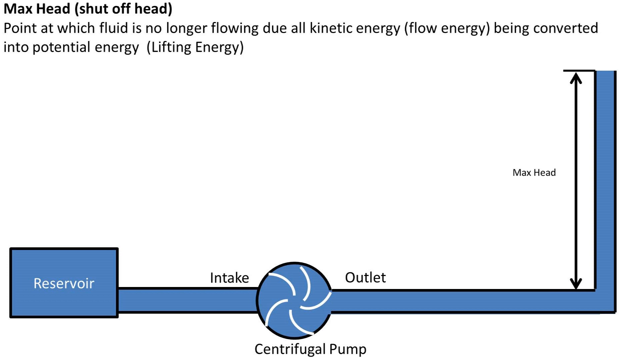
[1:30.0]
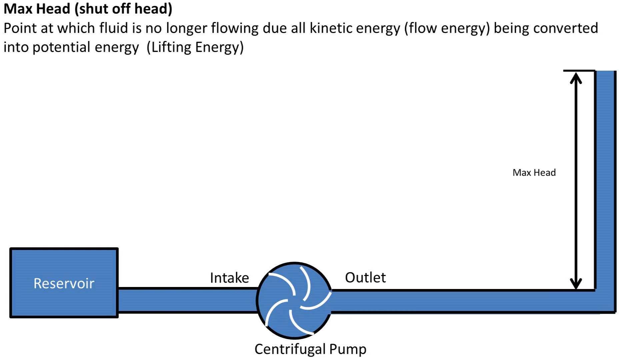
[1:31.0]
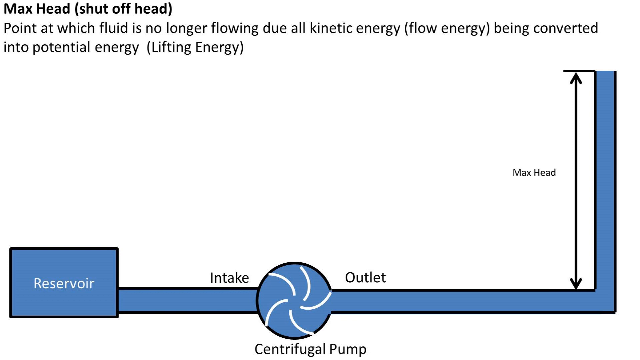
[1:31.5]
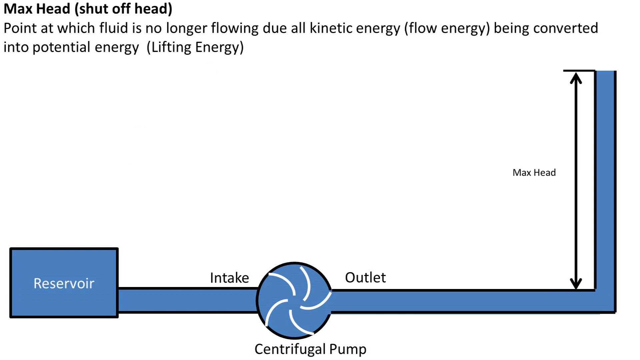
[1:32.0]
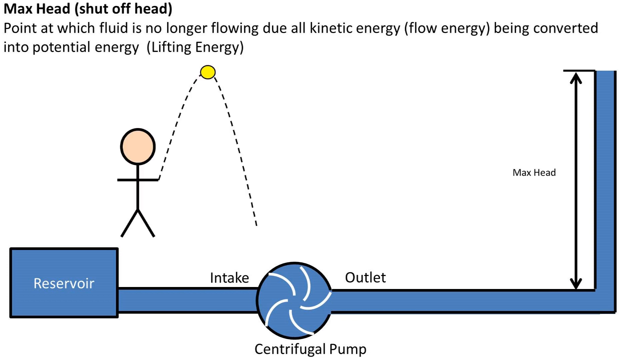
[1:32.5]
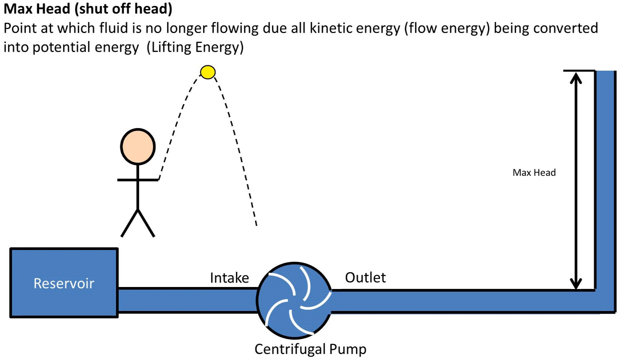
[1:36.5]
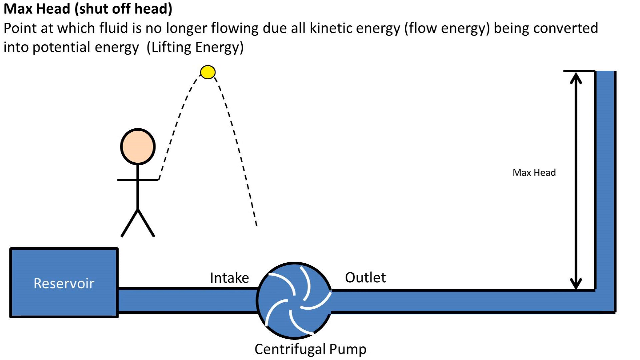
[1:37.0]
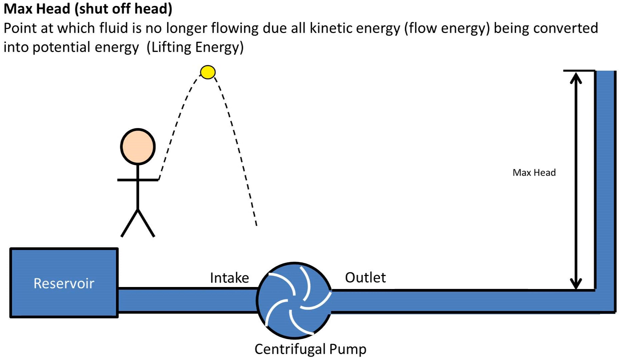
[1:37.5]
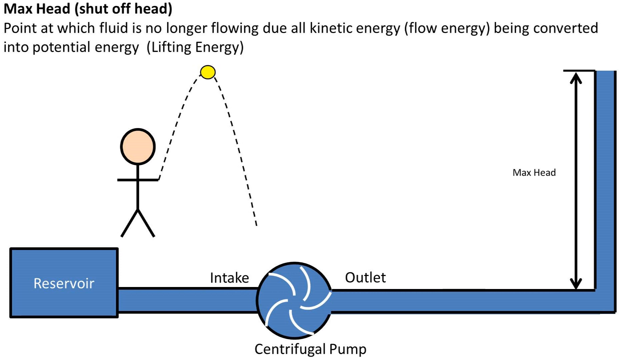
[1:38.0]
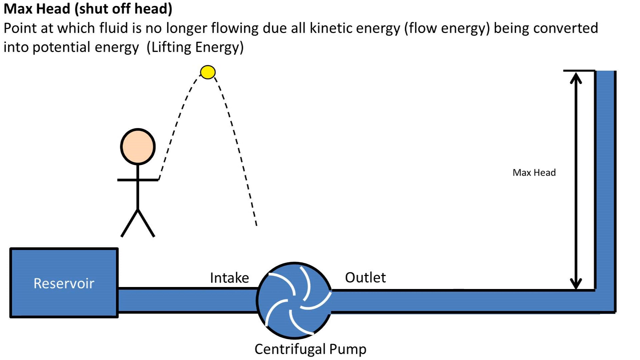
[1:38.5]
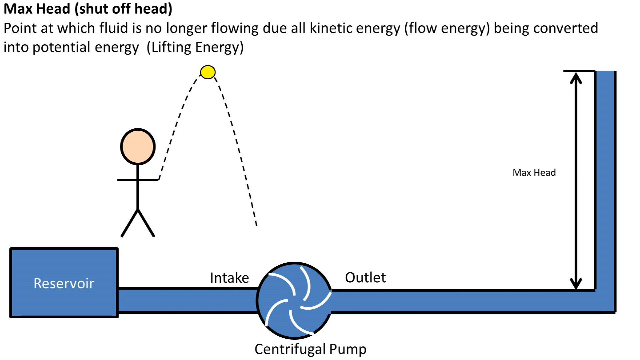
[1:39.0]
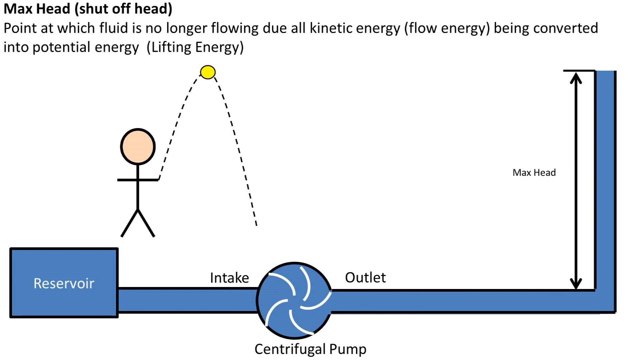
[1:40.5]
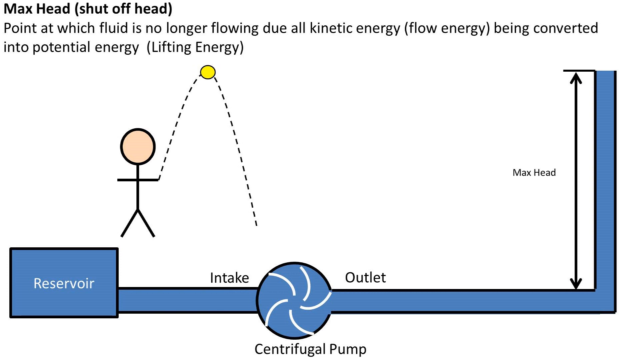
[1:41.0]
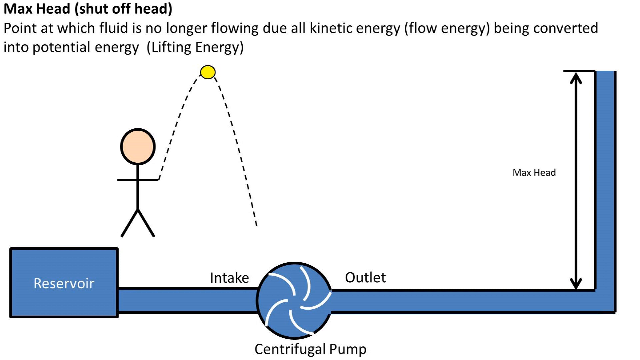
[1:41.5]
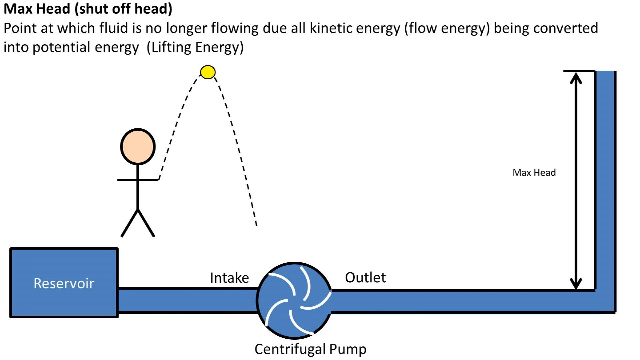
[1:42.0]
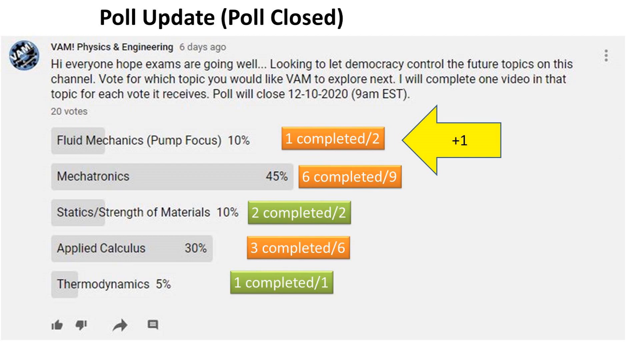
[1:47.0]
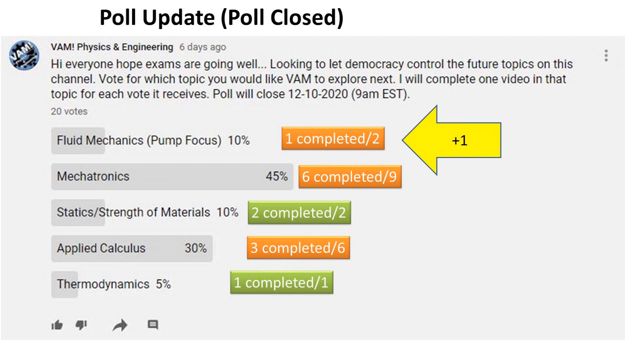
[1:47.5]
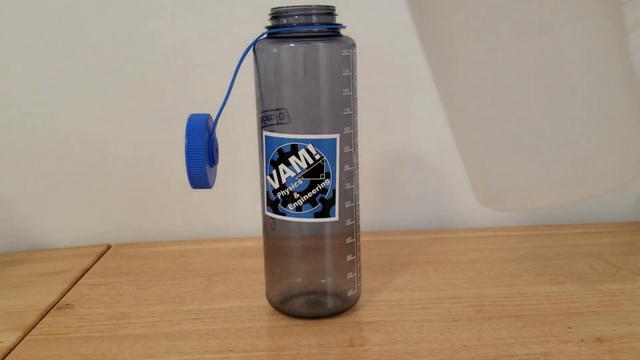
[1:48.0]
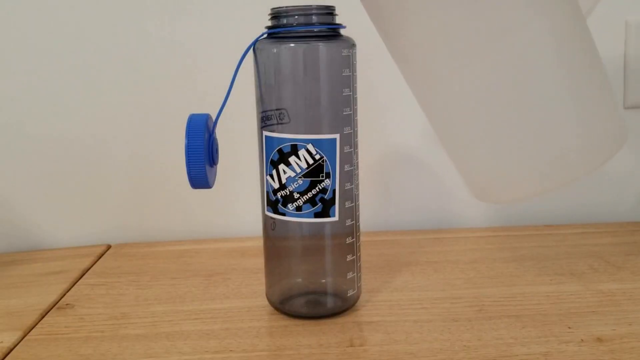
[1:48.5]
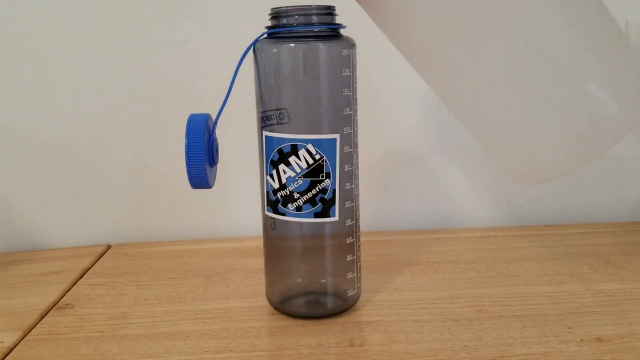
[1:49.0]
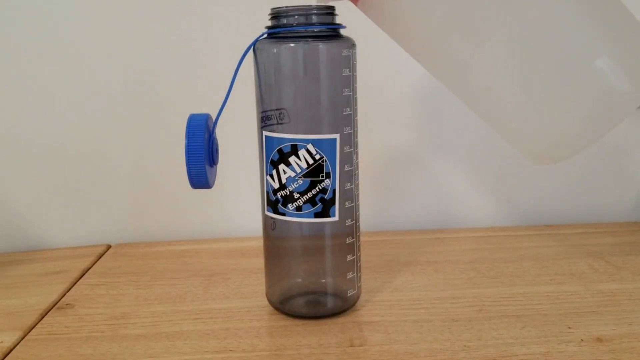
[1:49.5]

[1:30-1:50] The reservoir and the intake and outlet process are shown, along with a black arrow labeled max head indicating the maximum pressure. A stick figure is shown throwing a yellow ball, with the ball's energy shown while it is in the air. Black lines mark the ball's movement, each representing one frame of its position at that point in time. The scene then changes to a table with a gray water bottle with a blue lid. The background is white, with a white wall to the left of the desk.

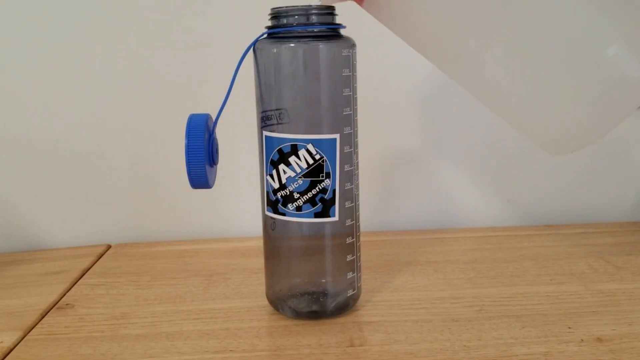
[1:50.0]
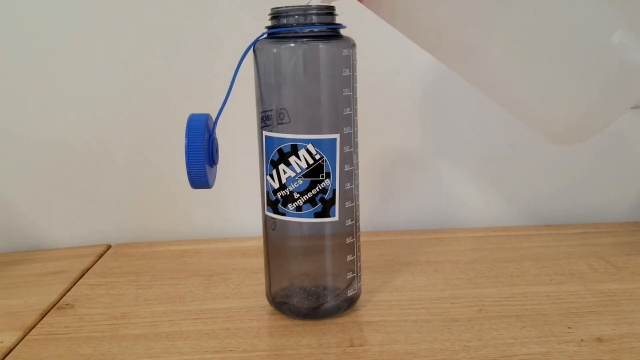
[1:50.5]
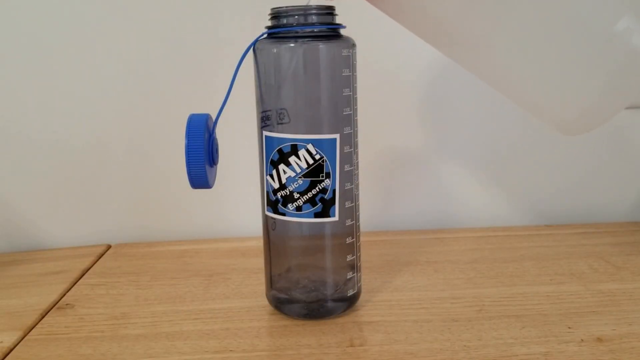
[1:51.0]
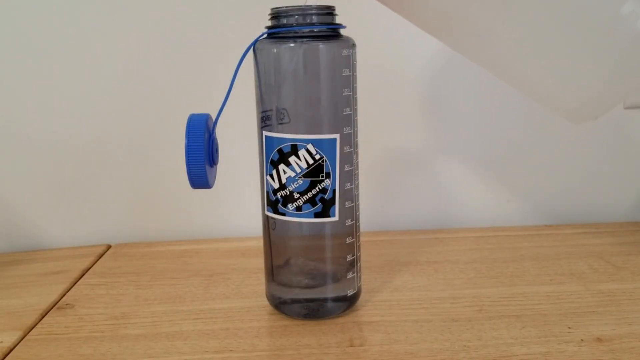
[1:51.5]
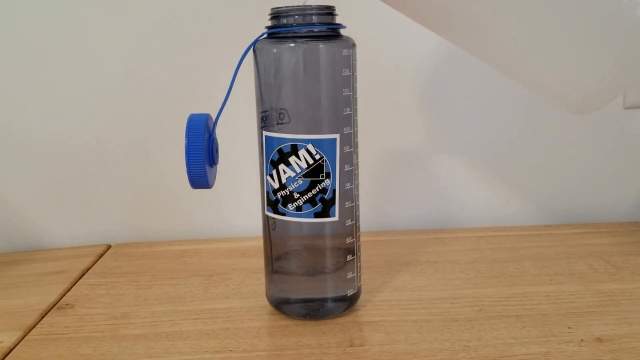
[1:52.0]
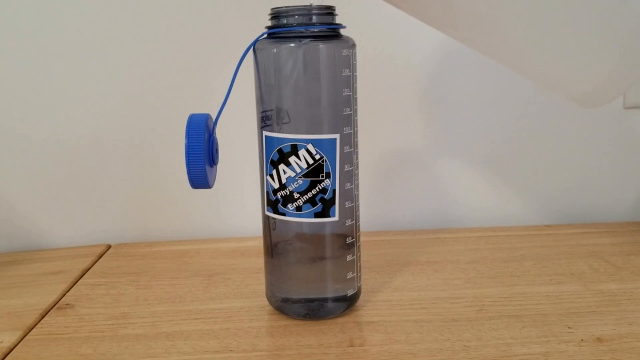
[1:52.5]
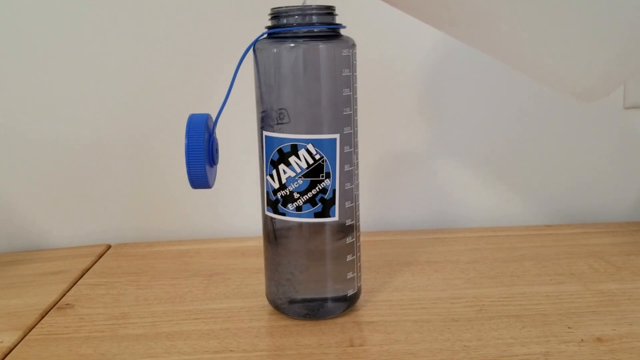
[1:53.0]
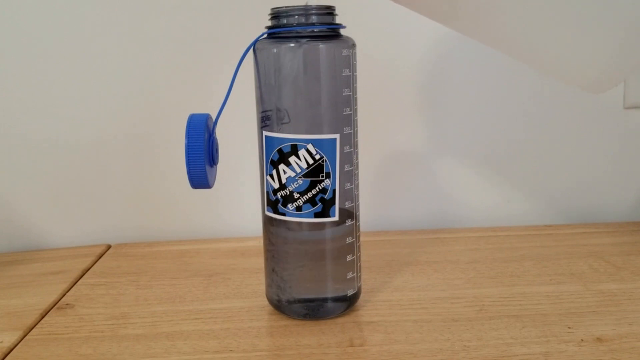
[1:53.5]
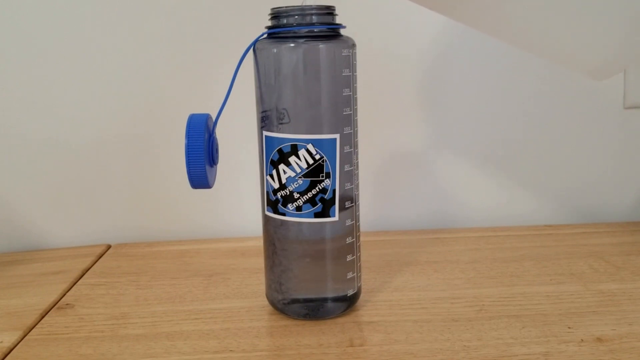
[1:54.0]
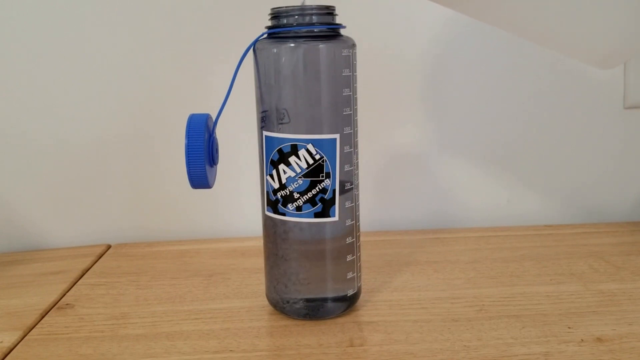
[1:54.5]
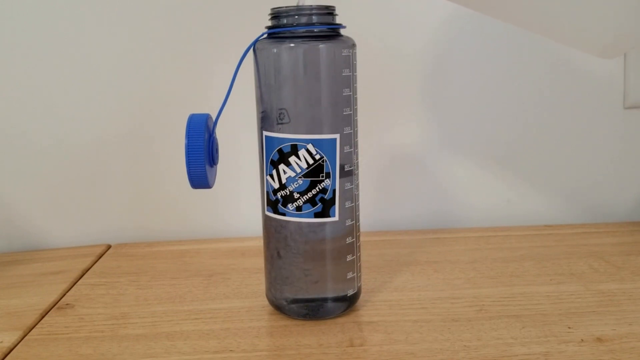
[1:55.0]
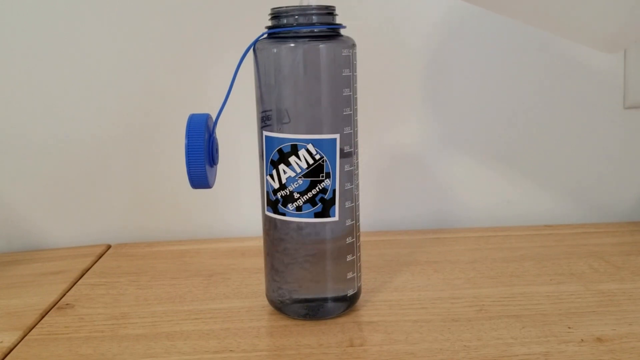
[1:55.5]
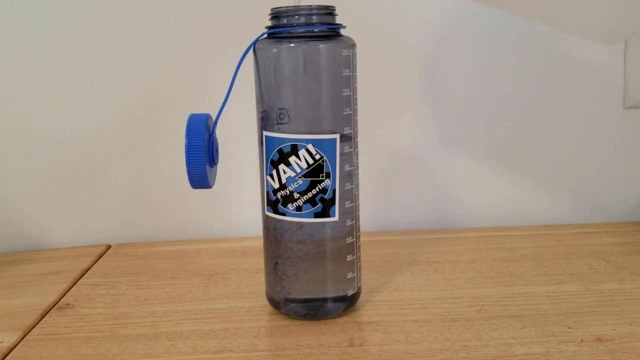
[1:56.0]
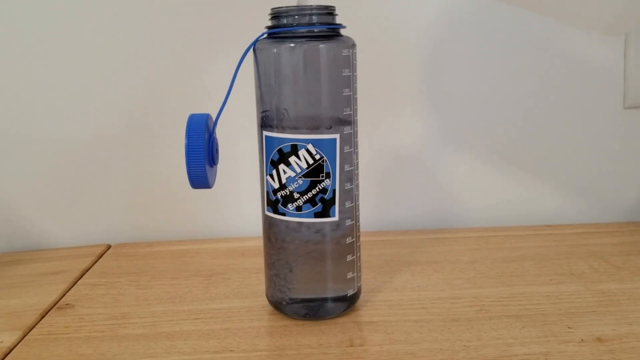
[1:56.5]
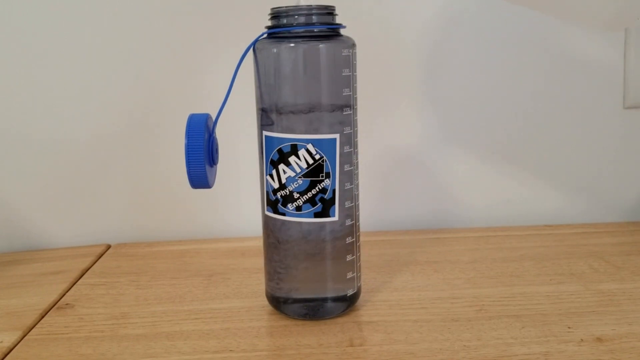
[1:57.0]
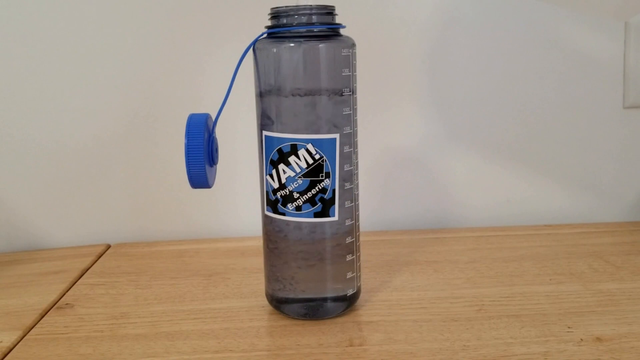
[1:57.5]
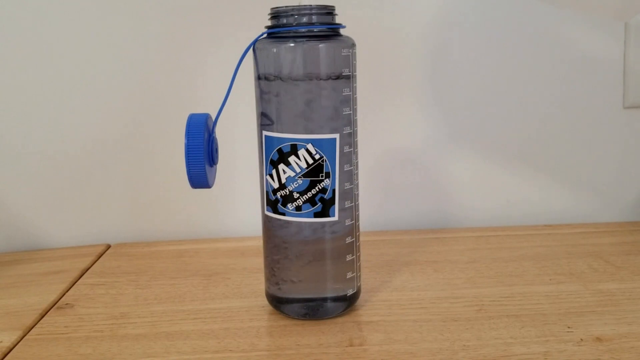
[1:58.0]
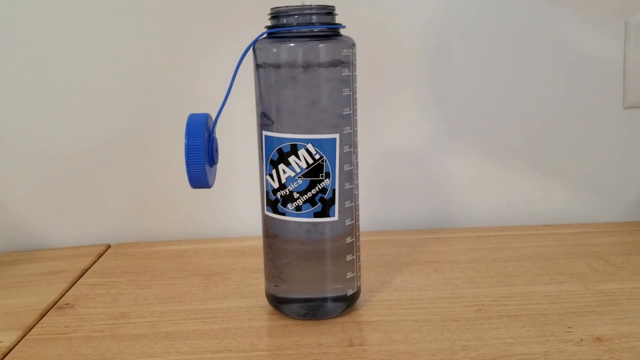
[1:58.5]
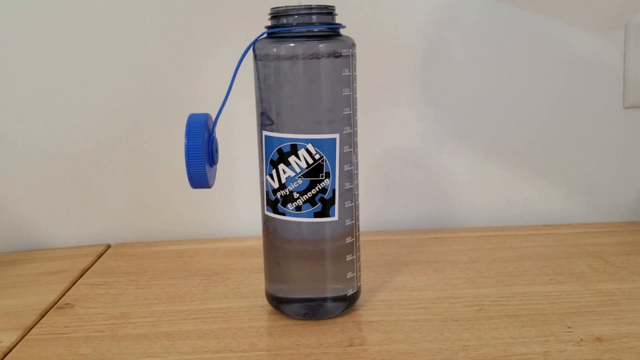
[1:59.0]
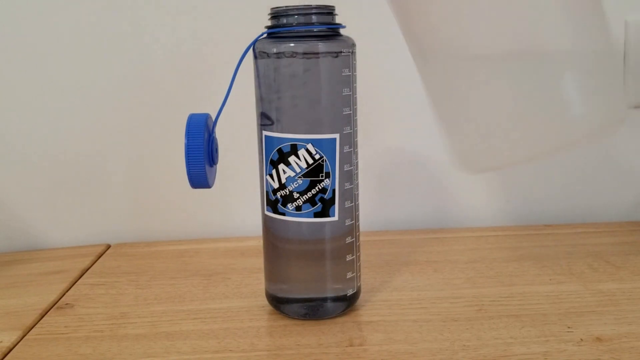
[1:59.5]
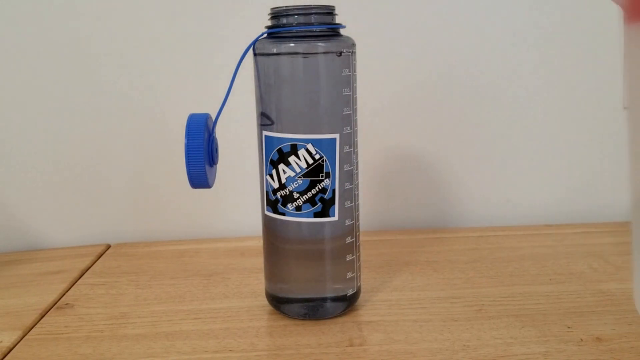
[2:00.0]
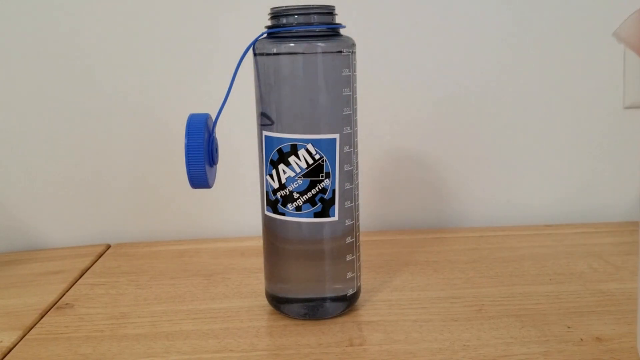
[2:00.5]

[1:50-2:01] A tan desk stands against a white wall. The water bottle on it has a square sticker logo with a white outer frame and a blue border; inside, "VAM!" is written in capital letters with an exclamation mark, surrounded by a circular border with "Physics and Engineering" written in normal case letters. The lid is blue with a round end and is attached to the top of the bottle by a long, rectangular blue stick. Water is poured into the jug up to the top, then emptied and refilled more slowly. The bottle used to pour the water is not clear.